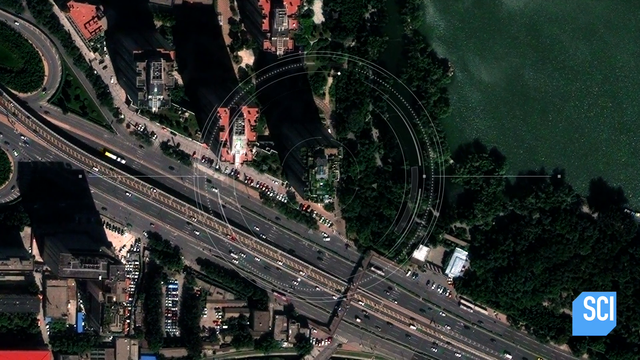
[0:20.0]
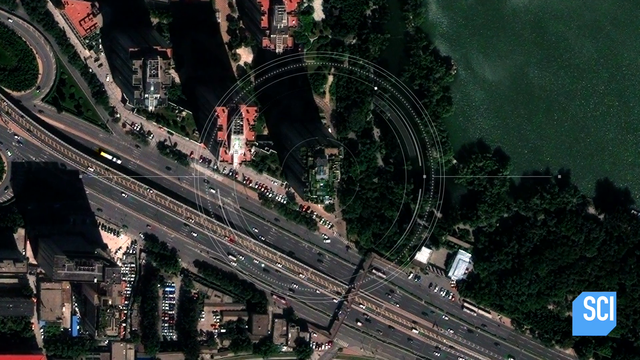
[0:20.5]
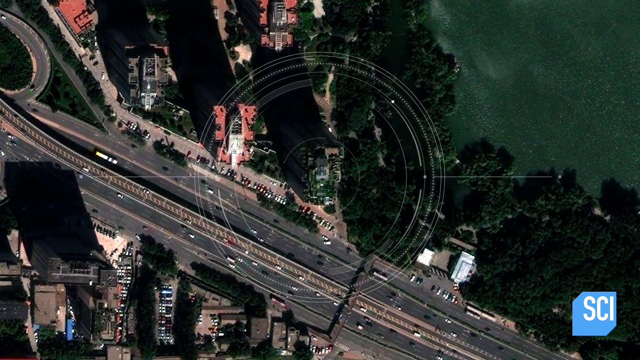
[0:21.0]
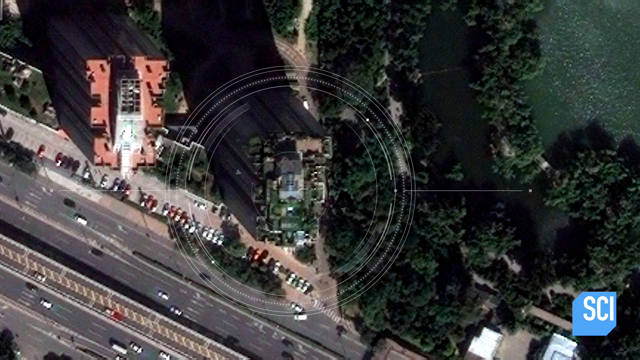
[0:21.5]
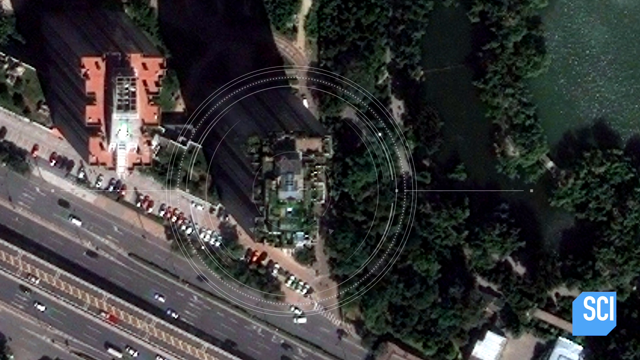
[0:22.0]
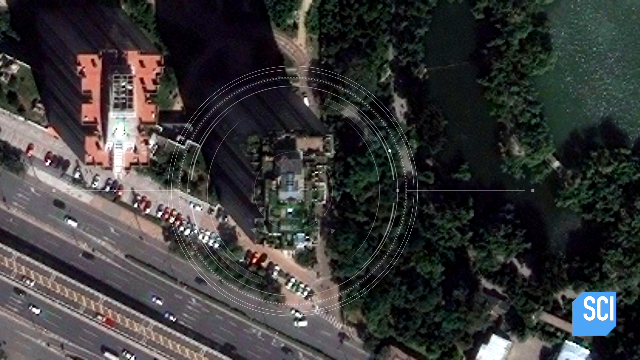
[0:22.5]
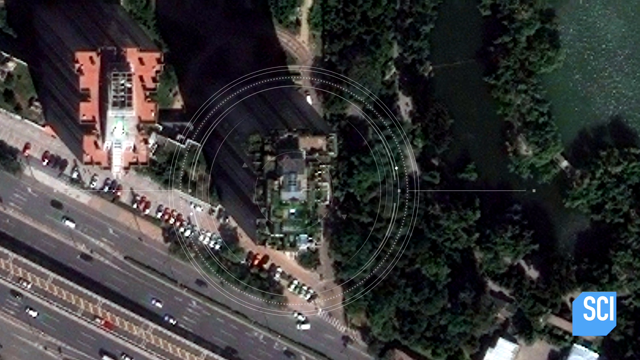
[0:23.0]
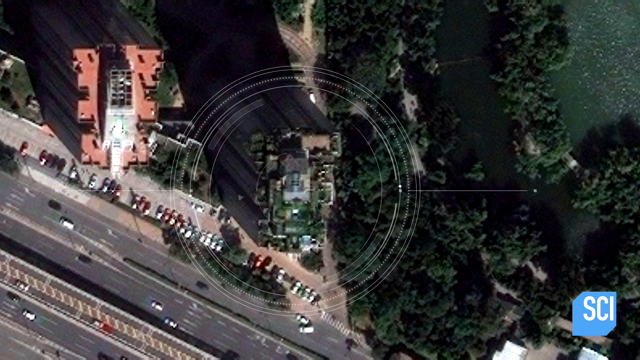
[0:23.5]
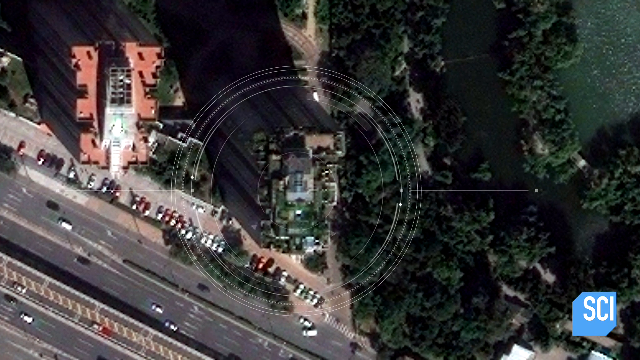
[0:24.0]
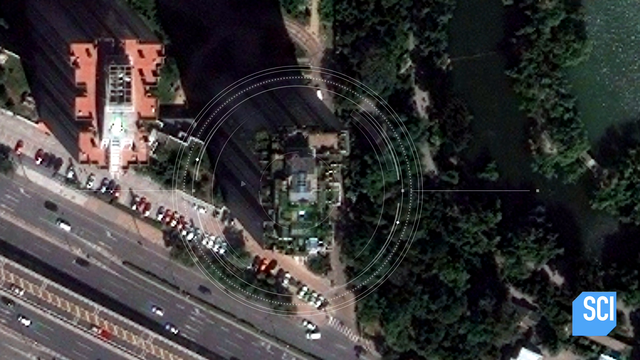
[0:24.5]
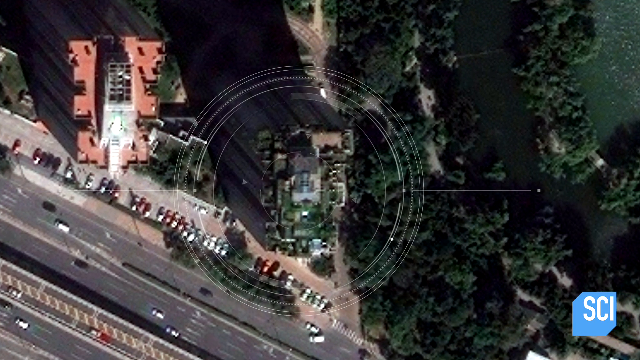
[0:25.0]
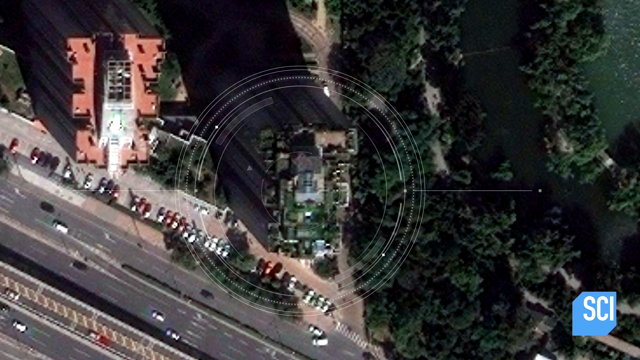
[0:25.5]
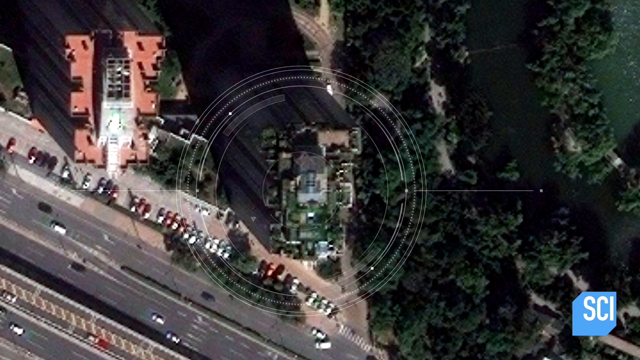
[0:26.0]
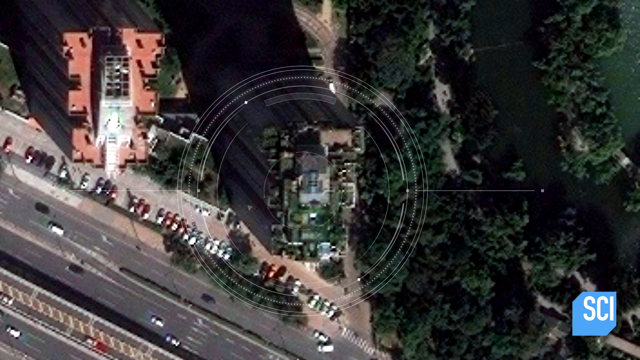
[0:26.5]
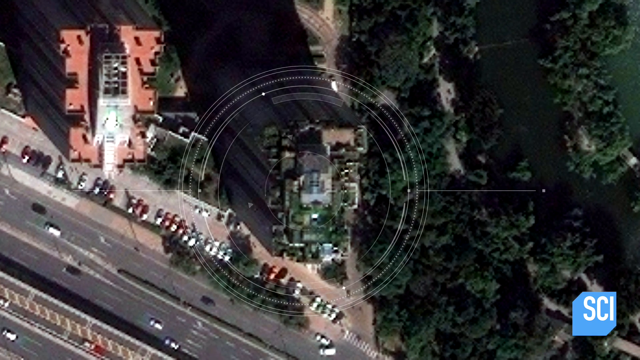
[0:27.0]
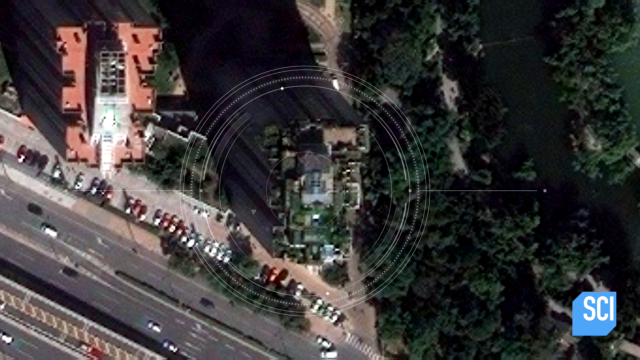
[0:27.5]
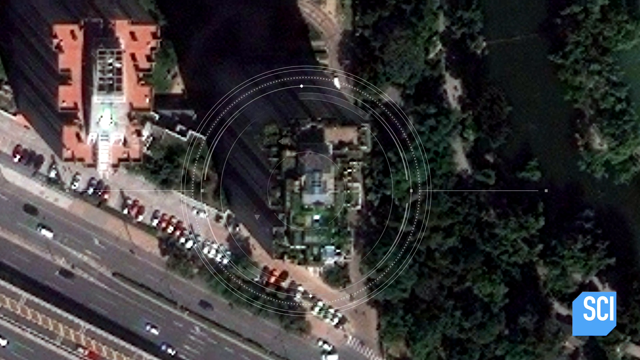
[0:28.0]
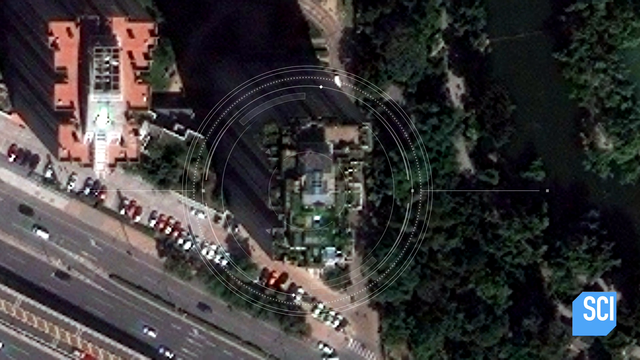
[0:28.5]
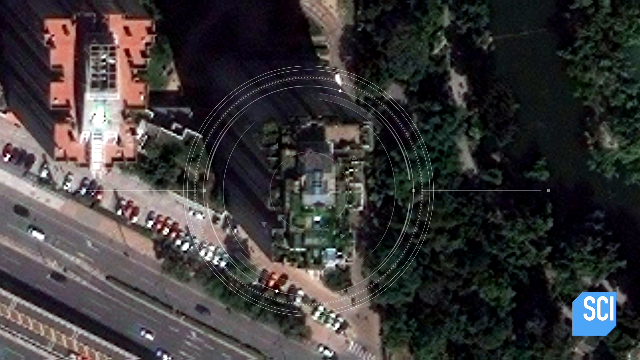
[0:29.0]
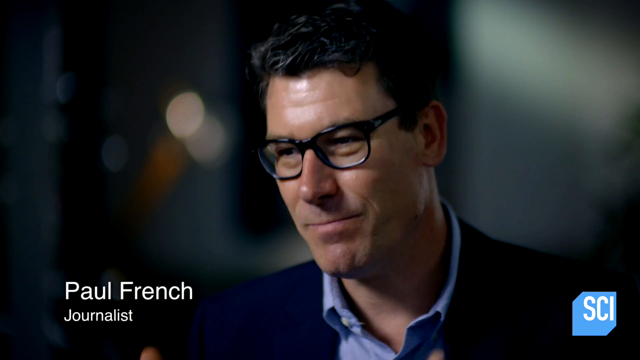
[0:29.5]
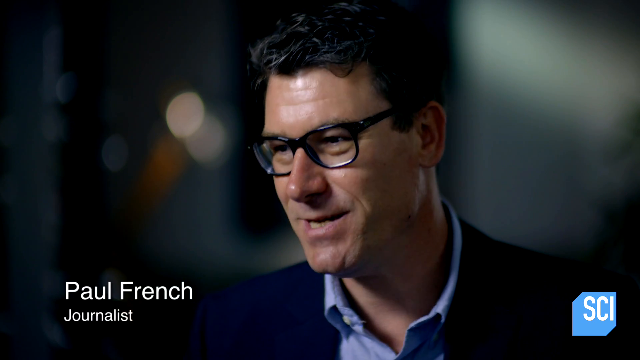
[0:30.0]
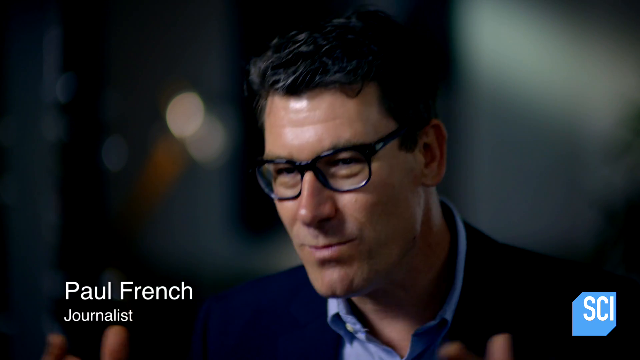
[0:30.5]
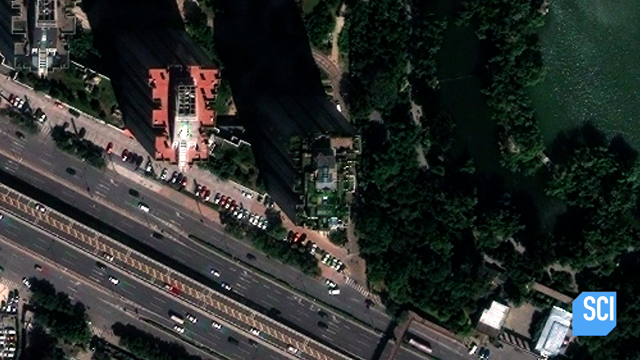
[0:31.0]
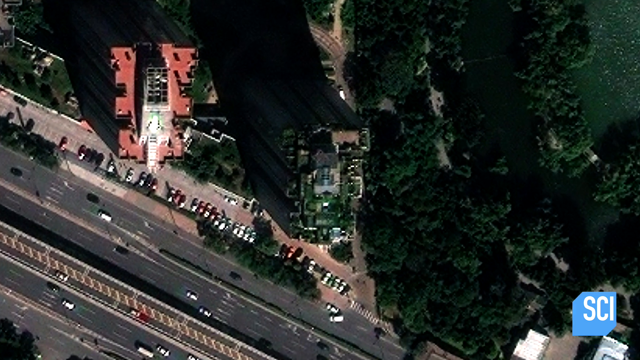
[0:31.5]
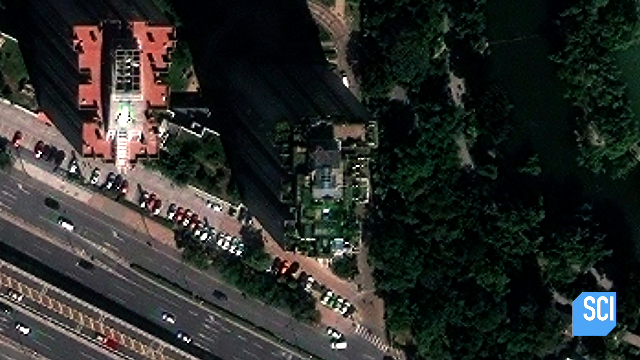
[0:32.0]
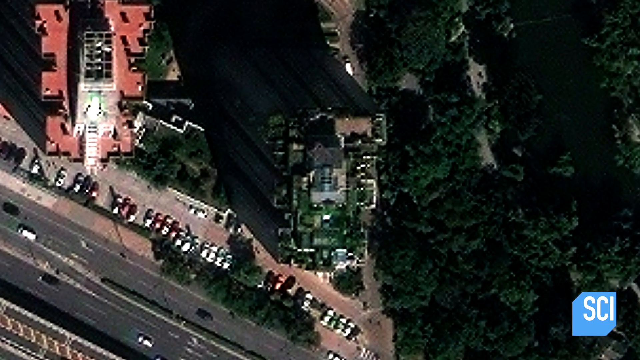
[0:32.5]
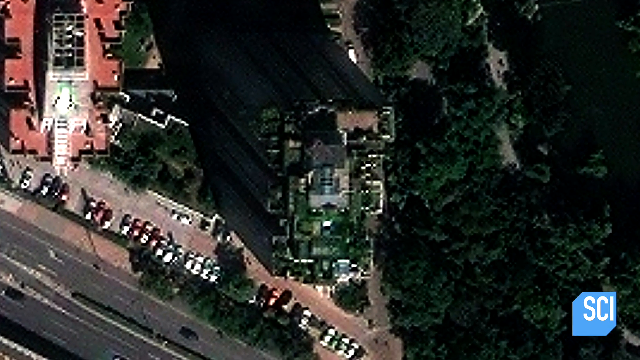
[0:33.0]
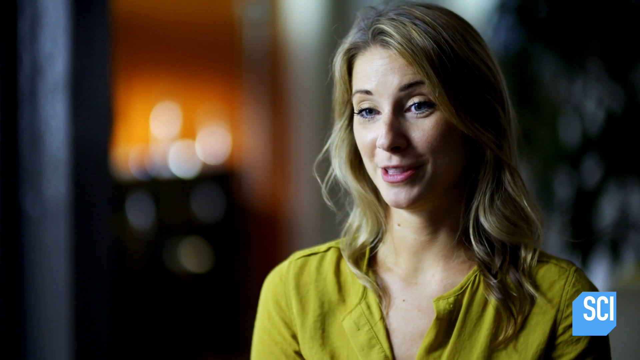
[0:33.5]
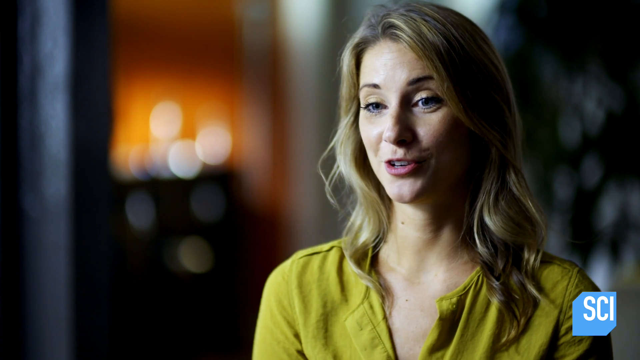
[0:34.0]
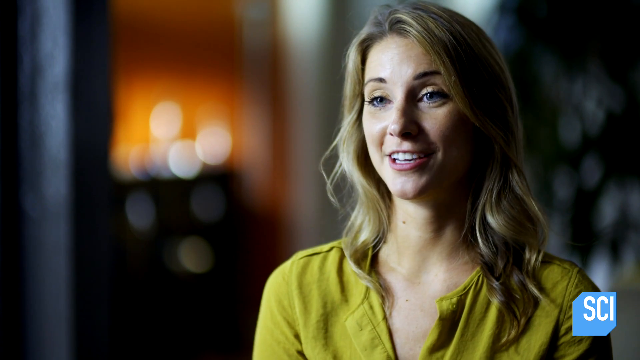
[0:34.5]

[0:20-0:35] A satellite view by John French, a journalist, shows a highlighted area that looks like it is in a somewhat commercial residential area. There are large buildings, probably a high-density housing area with apartments. There are actually two buildings, and the targeted building has a lot of trees and greenery growing on top of it, so it blends in very well with its surroundings. A parking lot in front of it is full of cars, many of them white and red. Trees are off to the right side of the complex, and a little further from the trees is a lake. Toward the bottom of the frame, in front of the building, is a divided four-lane highway, with an exit and more roads. The building looks multilayered and is covered with greenery.